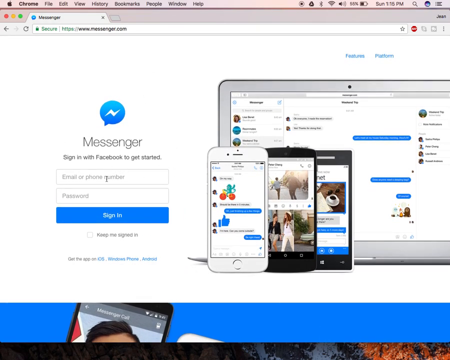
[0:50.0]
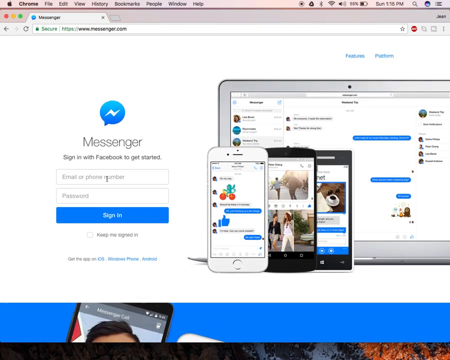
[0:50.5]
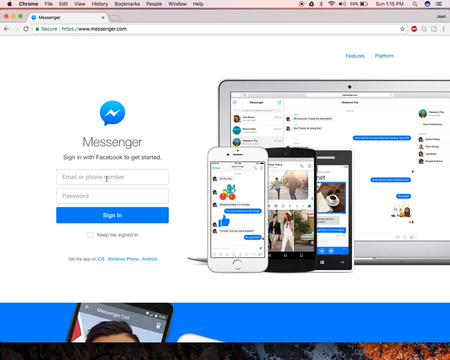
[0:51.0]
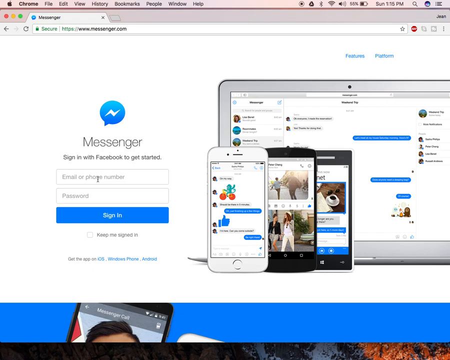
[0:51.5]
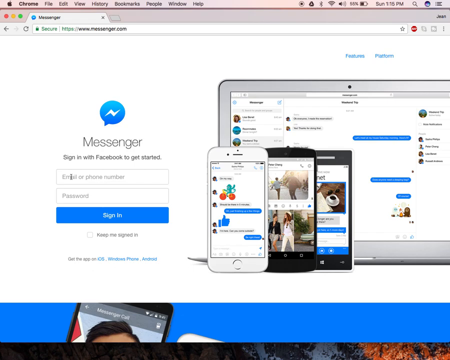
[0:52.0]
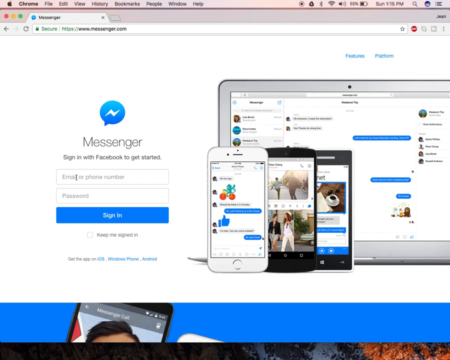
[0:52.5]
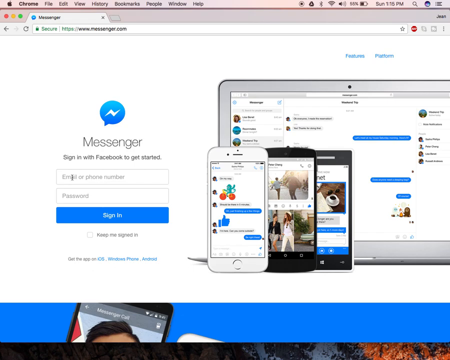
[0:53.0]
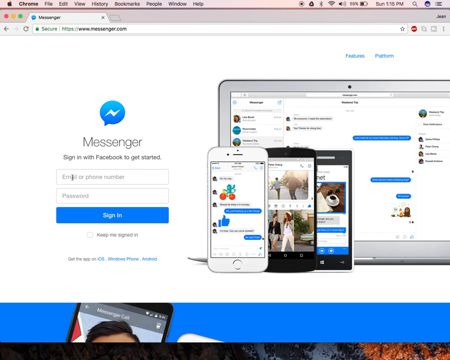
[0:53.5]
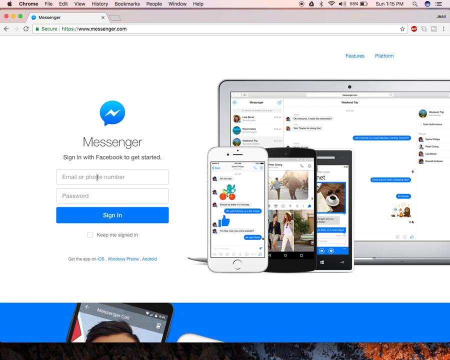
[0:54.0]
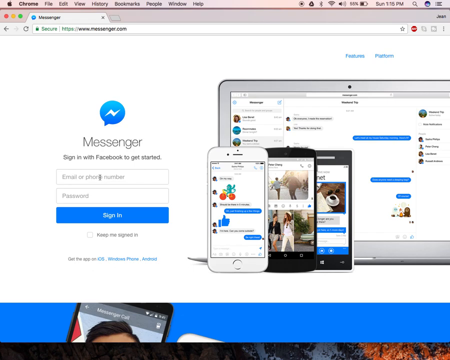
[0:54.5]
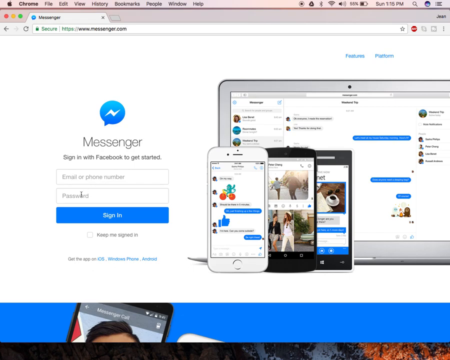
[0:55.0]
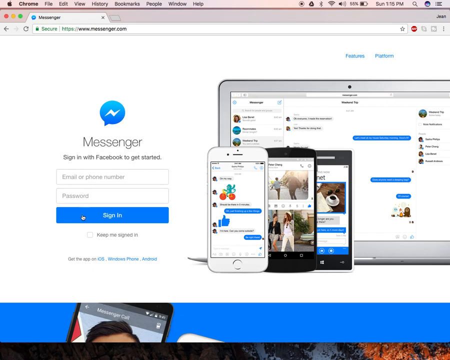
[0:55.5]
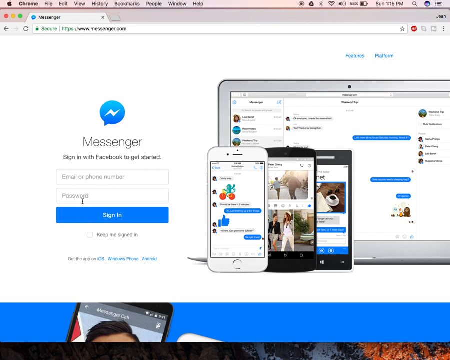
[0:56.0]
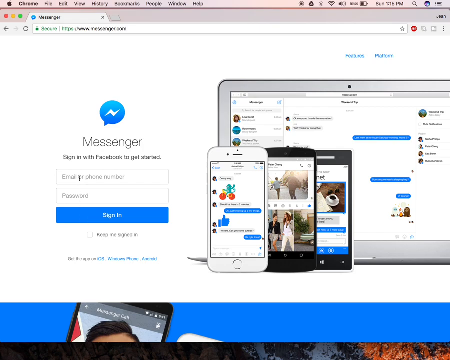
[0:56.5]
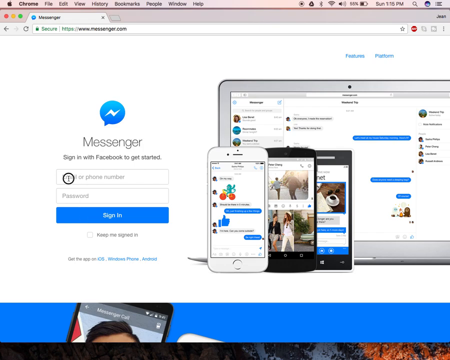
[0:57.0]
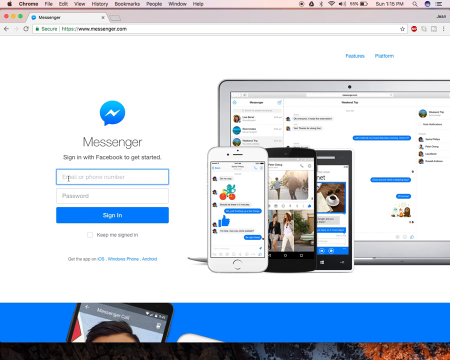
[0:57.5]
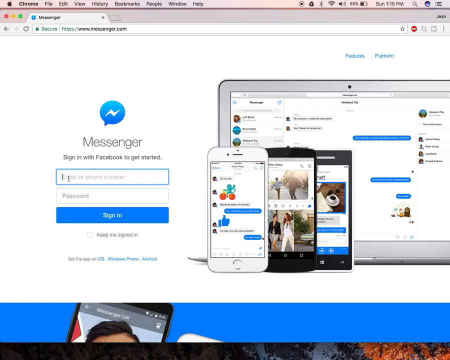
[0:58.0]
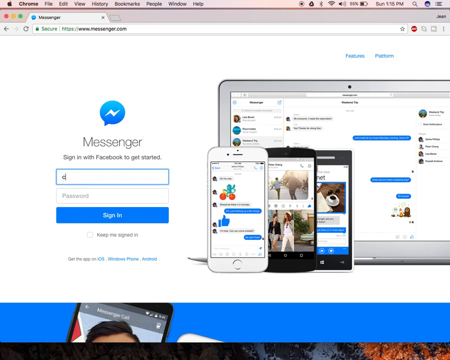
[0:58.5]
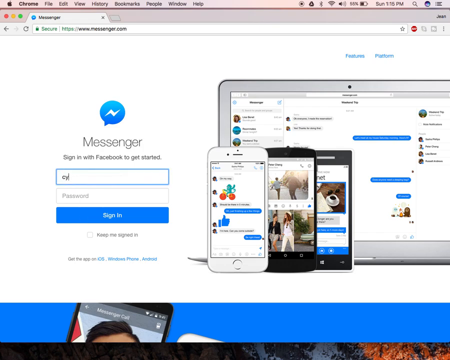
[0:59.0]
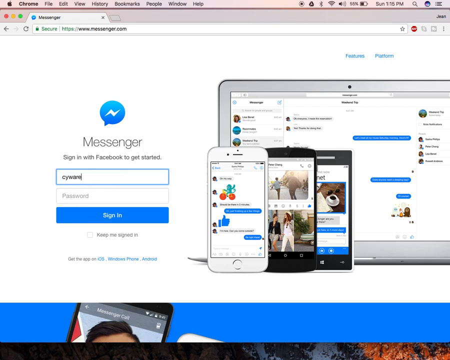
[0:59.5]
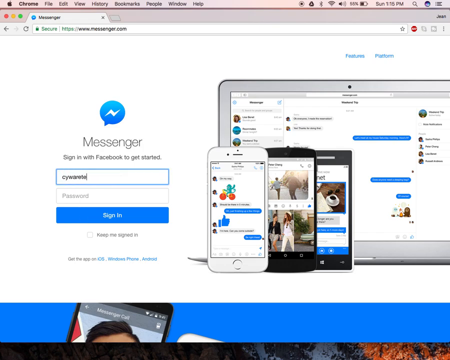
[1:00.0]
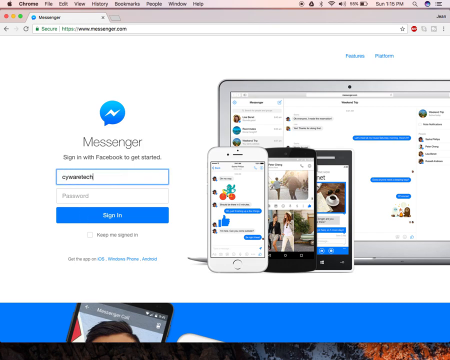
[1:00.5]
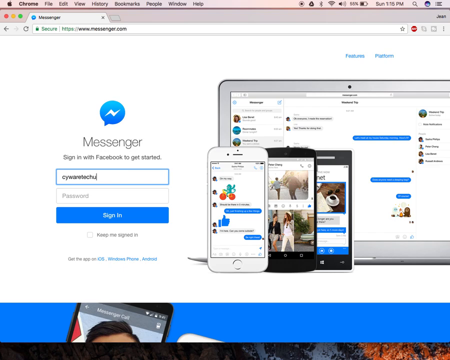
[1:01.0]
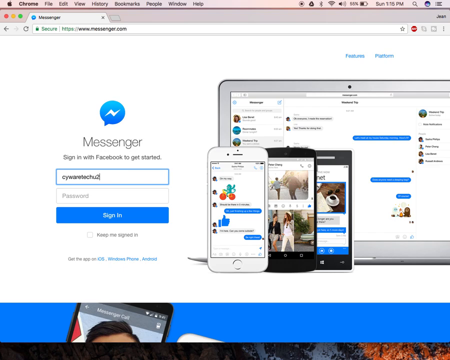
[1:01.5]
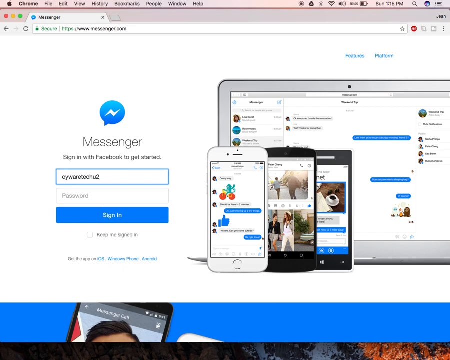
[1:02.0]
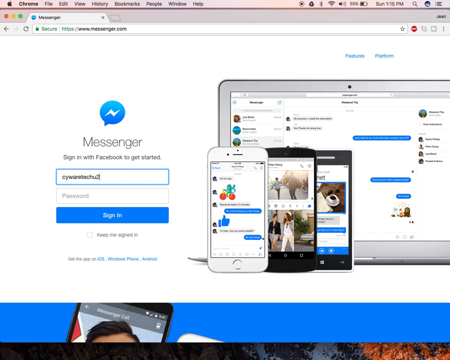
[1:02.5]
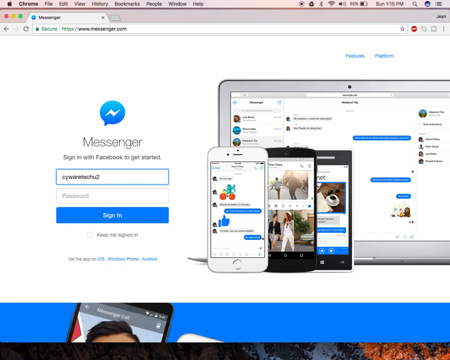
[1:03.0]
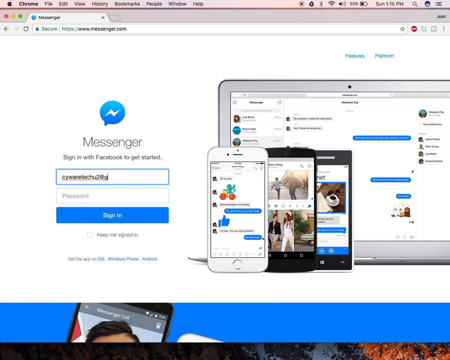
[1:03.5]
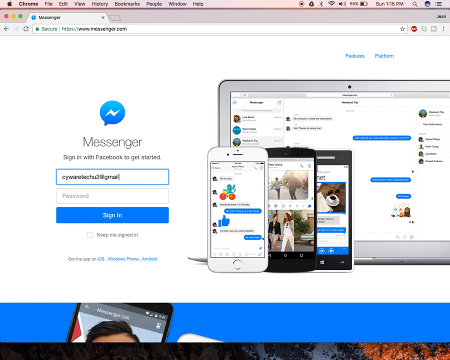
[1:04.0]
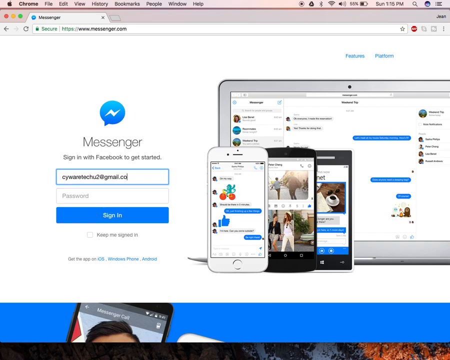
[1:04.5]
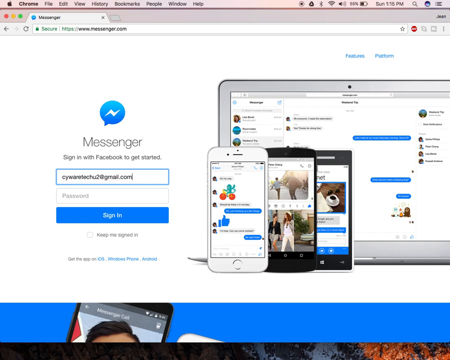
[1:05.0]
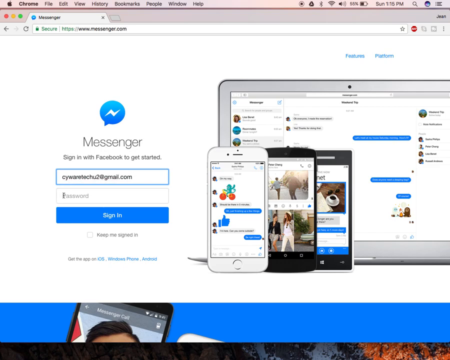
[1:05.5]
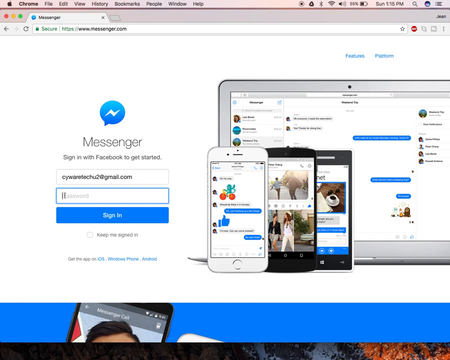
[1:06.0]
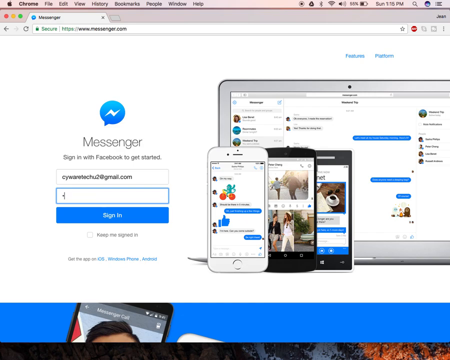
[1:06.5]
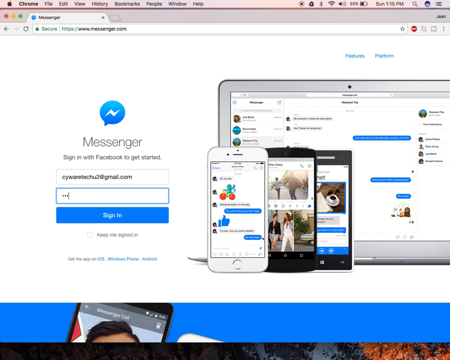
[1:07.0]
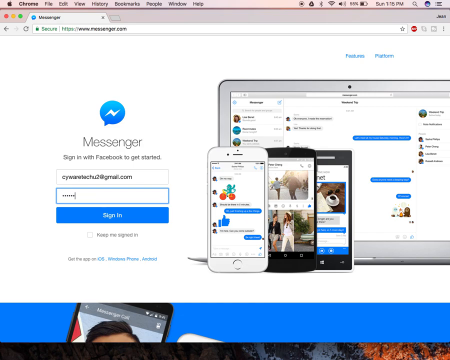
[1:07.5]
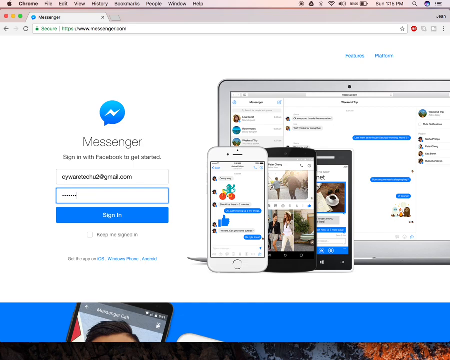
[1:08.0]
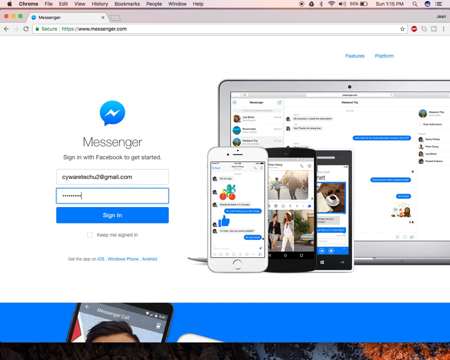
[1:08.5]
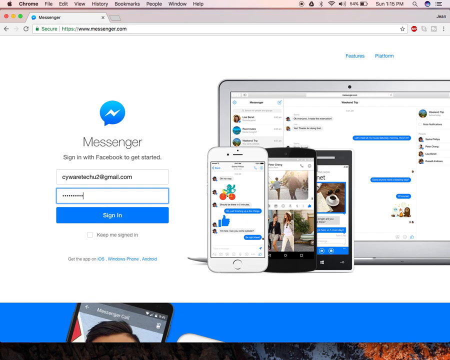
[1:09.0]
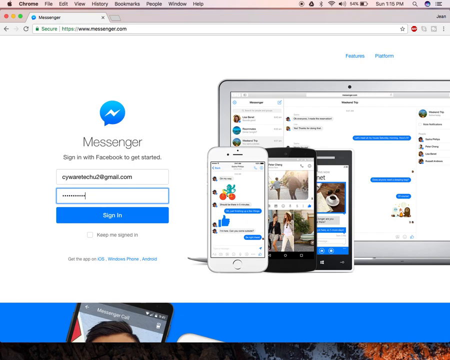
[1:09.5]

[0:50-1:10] On the Messenger get-started page, he inputs a name or username and a password to sign in to Messenger. There is an option to keep the account signed in.